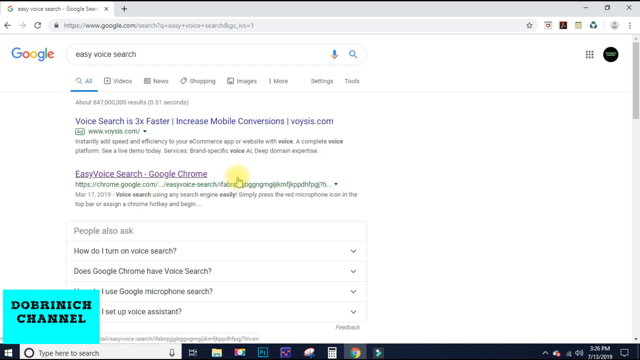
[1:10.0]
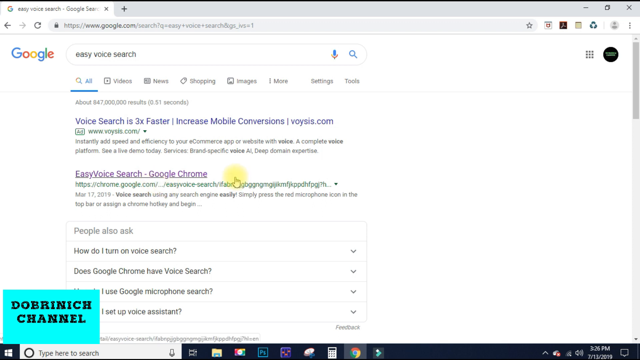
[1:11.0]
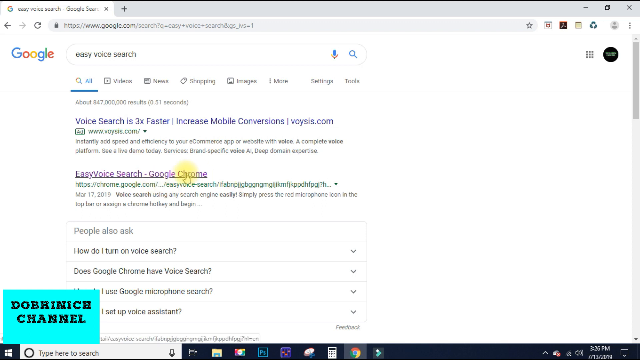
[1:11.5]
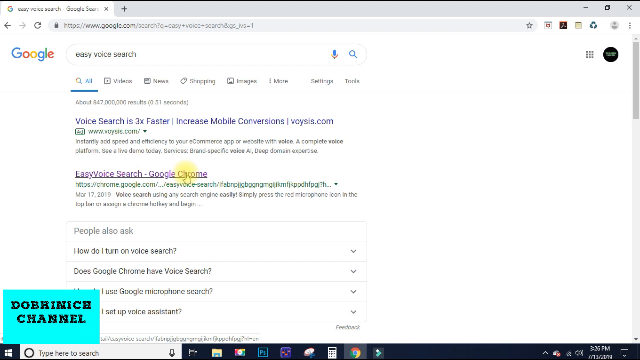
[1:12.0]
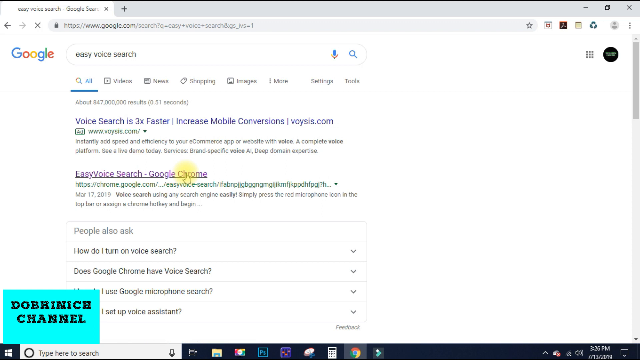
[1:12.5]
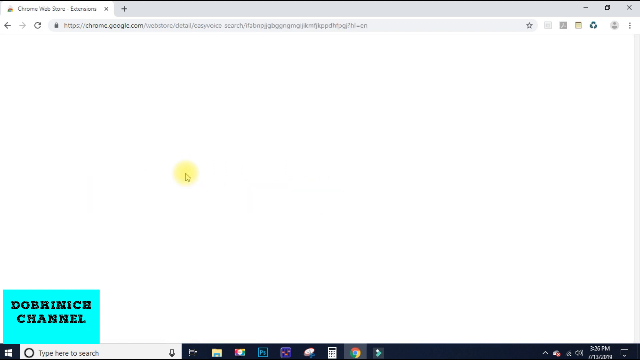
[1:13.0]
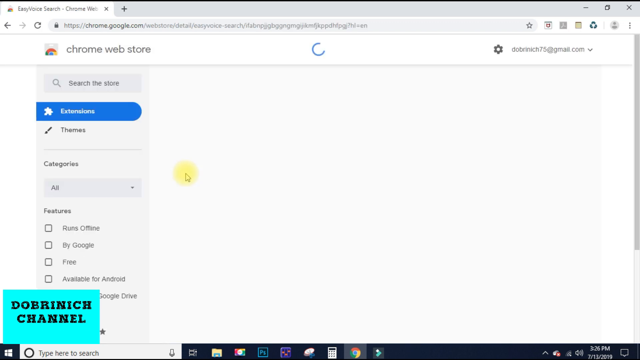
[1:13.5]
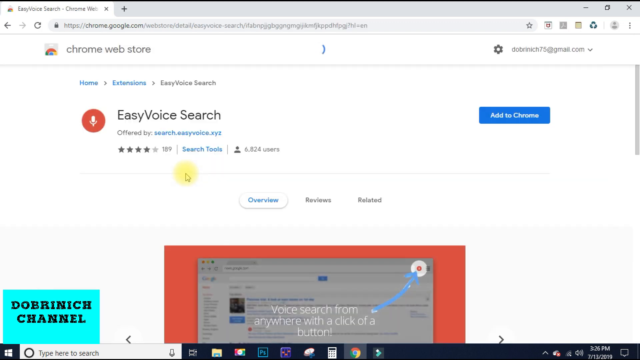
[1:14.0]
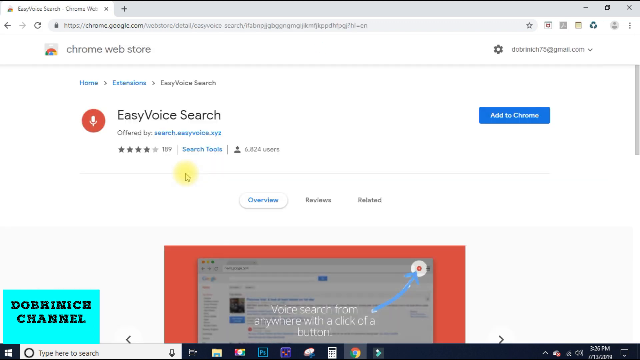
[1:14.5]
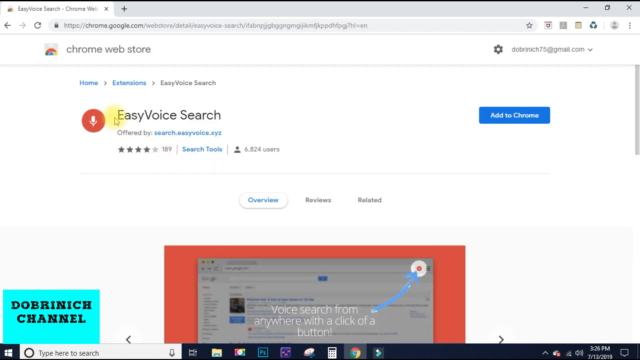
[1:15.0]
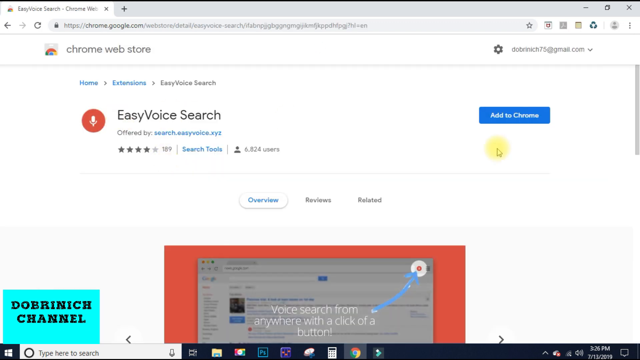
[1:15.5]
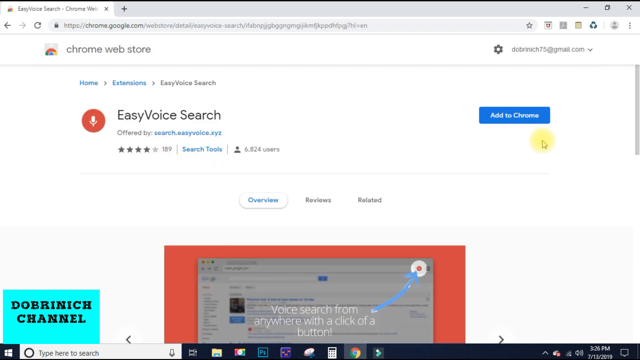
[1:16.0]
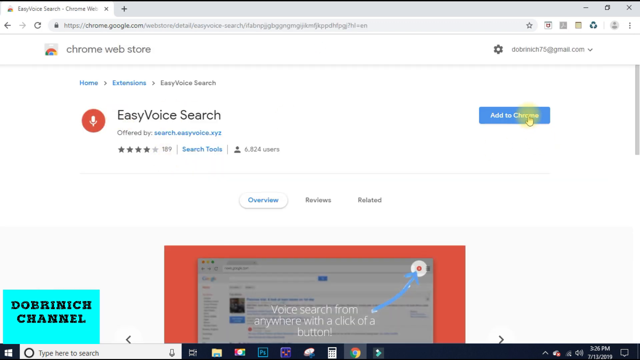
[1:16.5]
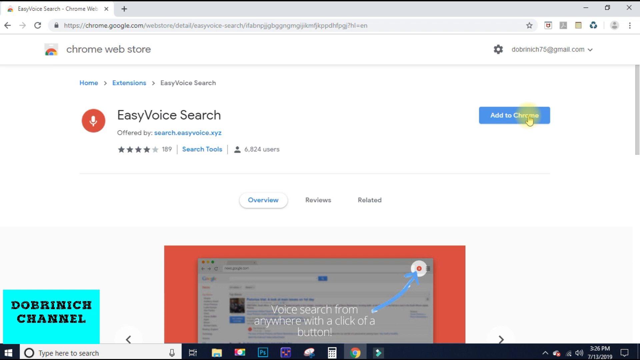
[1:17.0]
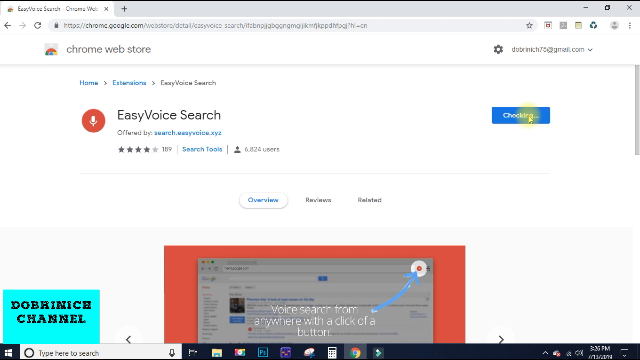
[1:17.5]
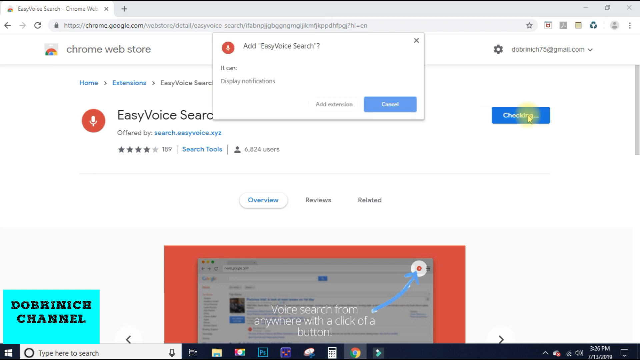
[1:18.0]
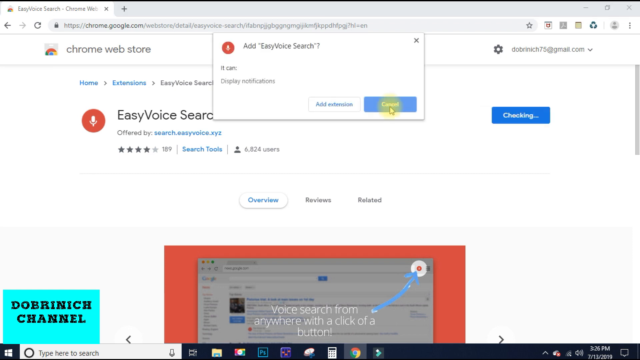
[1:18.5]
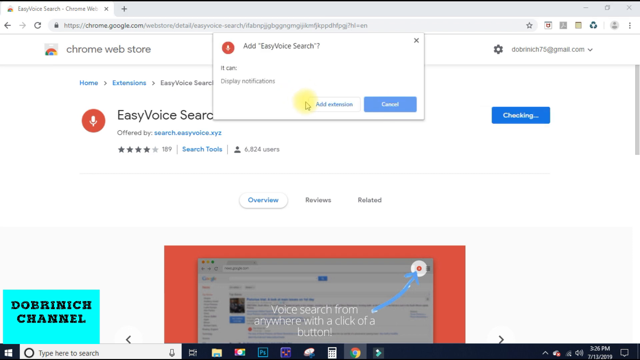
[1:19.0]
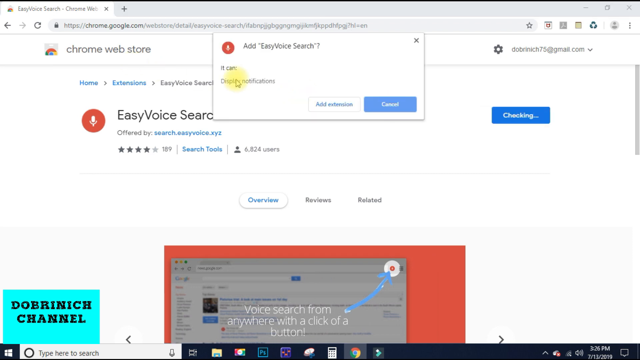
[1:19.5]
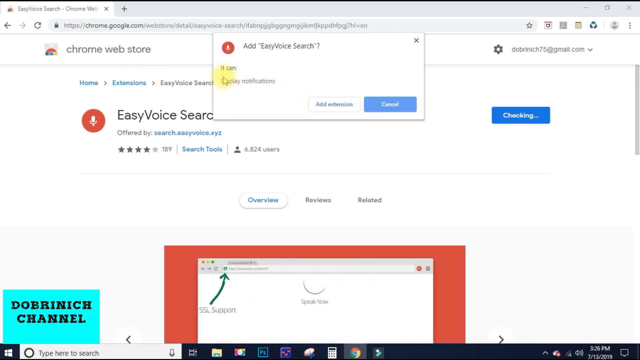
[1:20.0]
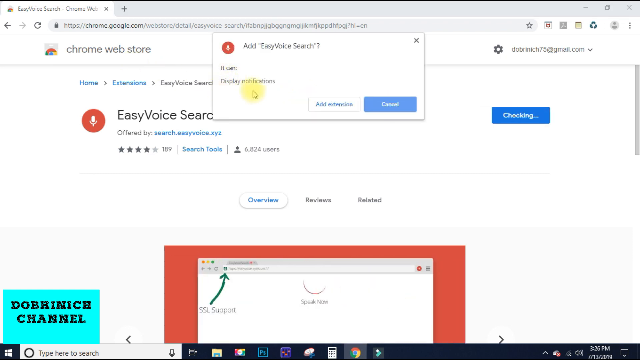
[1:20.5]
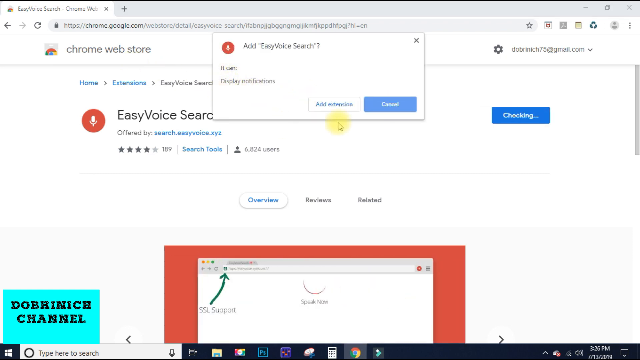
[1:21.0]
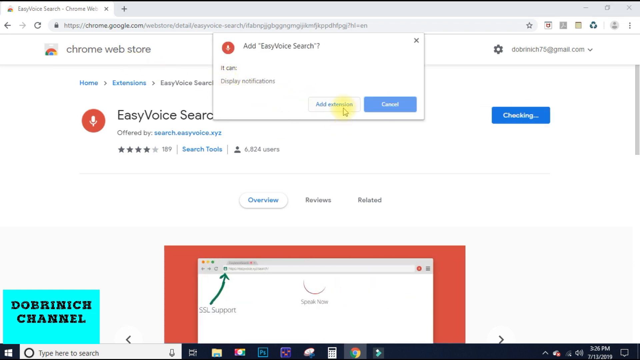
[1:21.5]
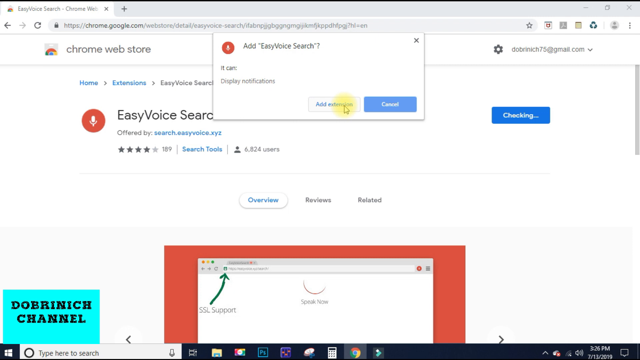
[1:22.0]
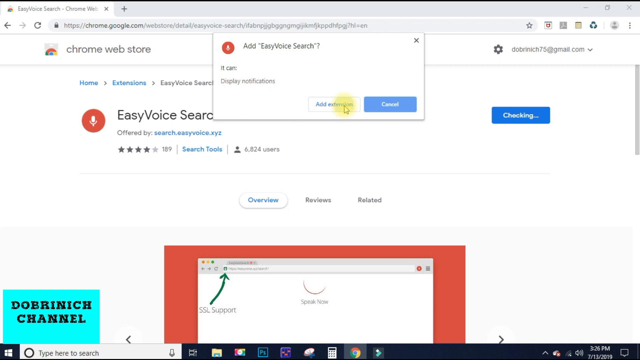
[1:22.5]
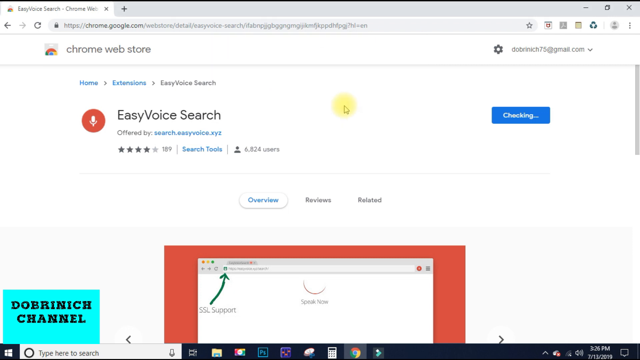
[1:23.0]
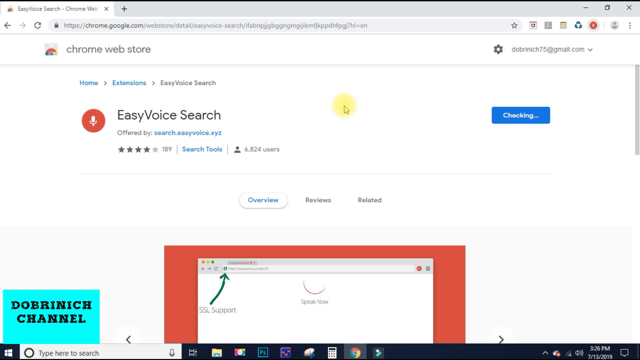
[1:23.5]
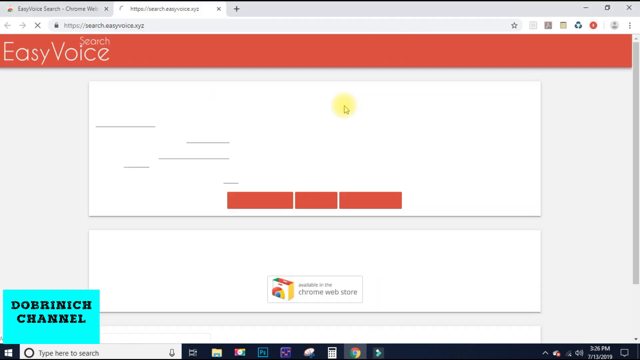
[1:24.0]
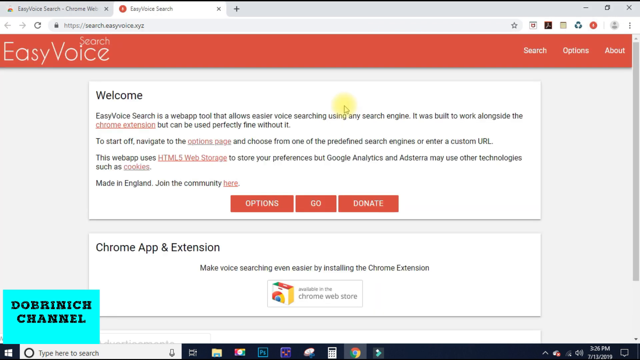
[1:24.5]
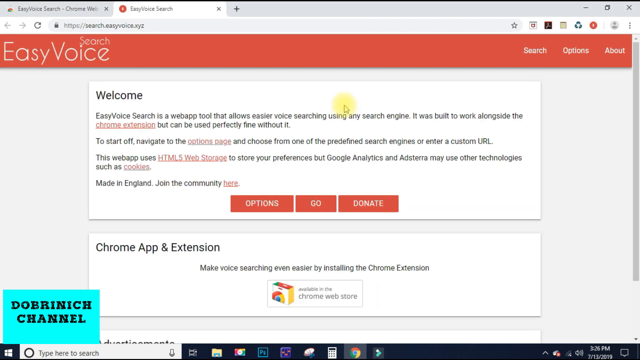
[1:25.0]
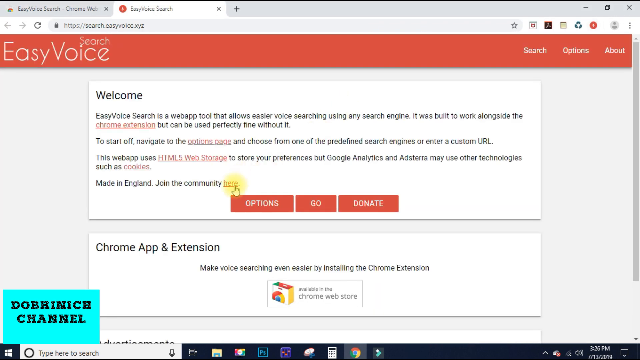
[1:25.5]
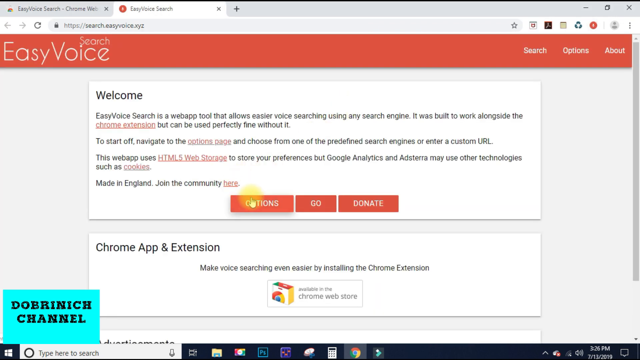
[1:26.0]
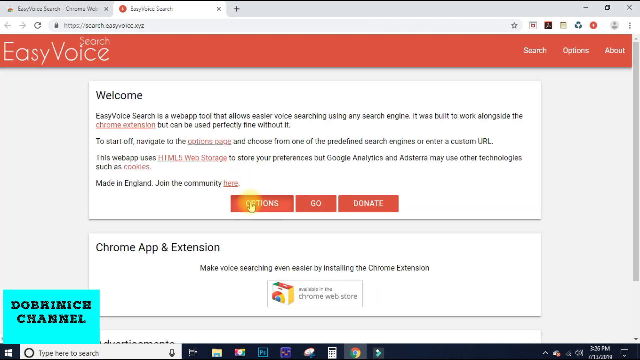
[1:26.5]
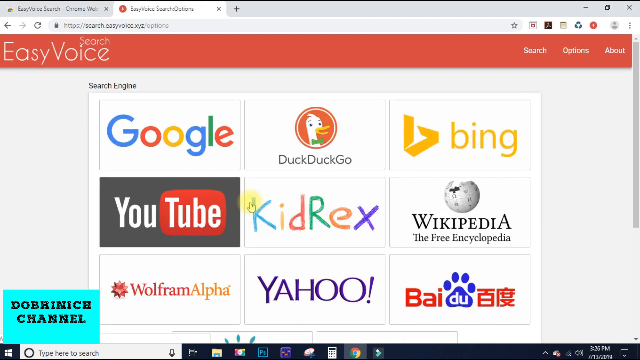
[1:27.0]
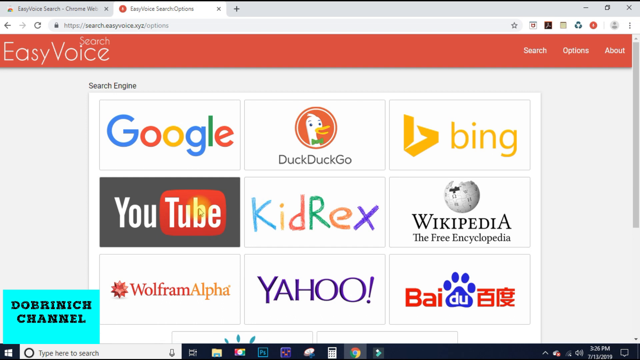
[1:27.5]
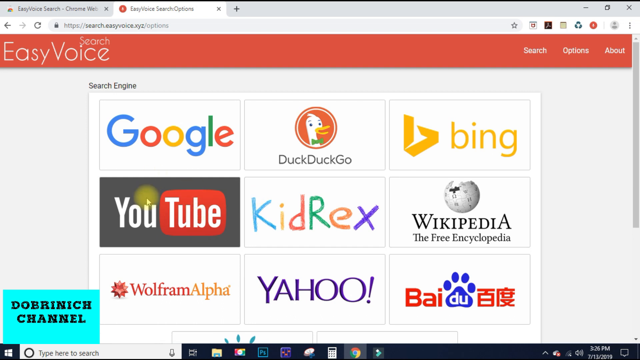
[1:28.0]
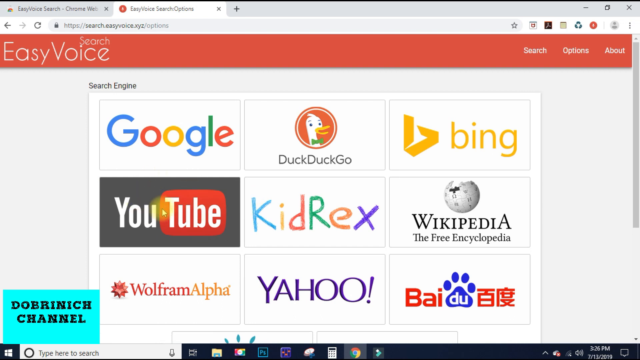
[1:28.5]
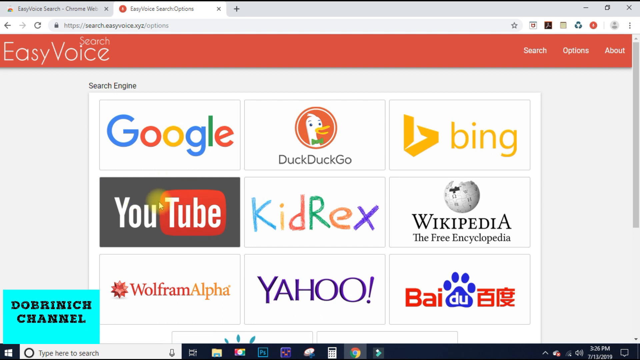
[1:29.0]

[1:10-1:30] The person clicks the Google Chrome result, which brings up the Chrome Web Store with Easy Voice Search below. He clicks Add to Chrome on the right-hand side, which brings up a new box that says "Add Easy Voice Search" and "It can display notifications", with the options "Add Extension" and "Cancel"; the person clicks Add Extension. At the bottom there are clips with examples of what Easy Voice Search does. A new tab then opens that says "Easy Voice" and "Welcome", along with "Easy Voice Search is a web app tool that allows easier voice searching using any search engine". Below it are three options, Options, Go and Donate. The person clicks Options, which brings up the different search engines: Google, DuckDuckGo, Bing, Wikipedia, KidRex, YouTube and Yahoo. They hover the mouse over the top right option, DuckDuckGo, and then over YouTube.